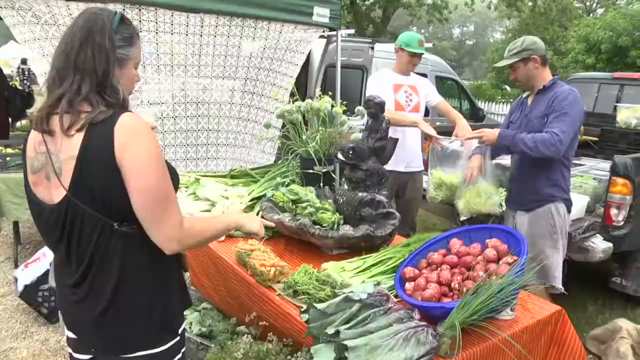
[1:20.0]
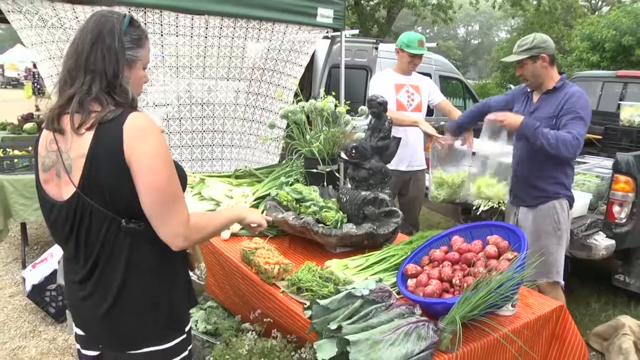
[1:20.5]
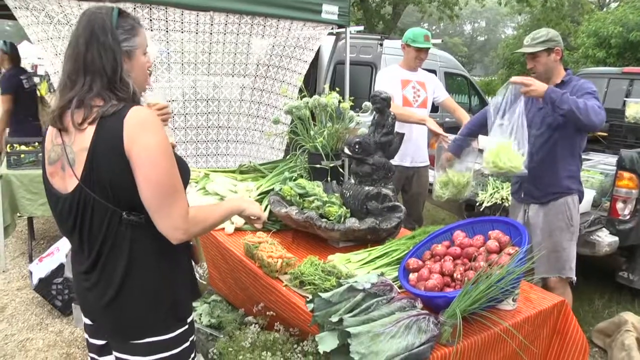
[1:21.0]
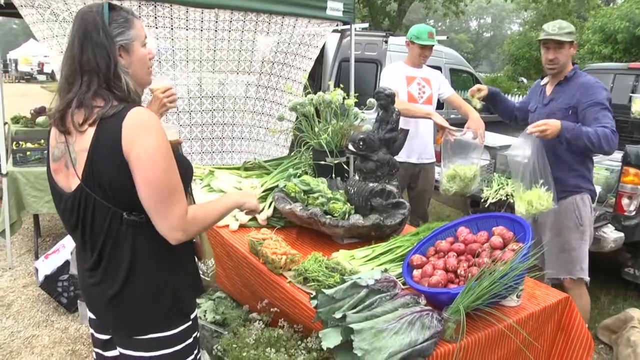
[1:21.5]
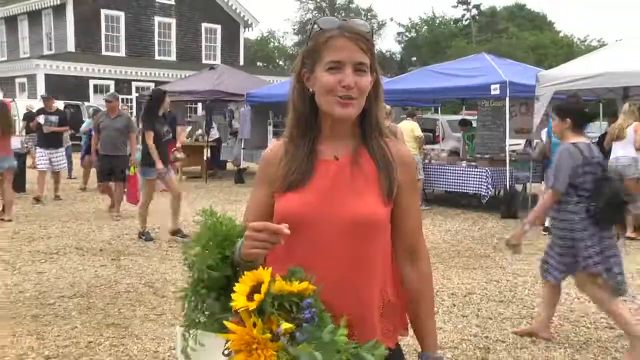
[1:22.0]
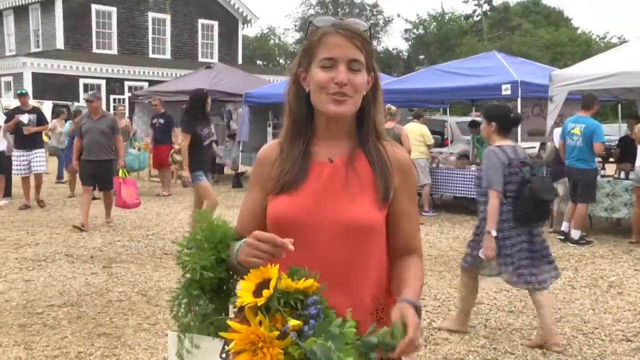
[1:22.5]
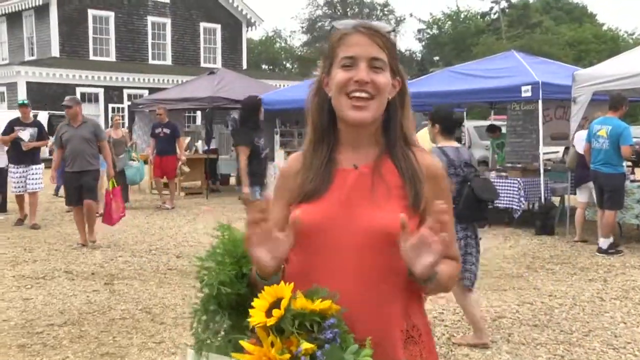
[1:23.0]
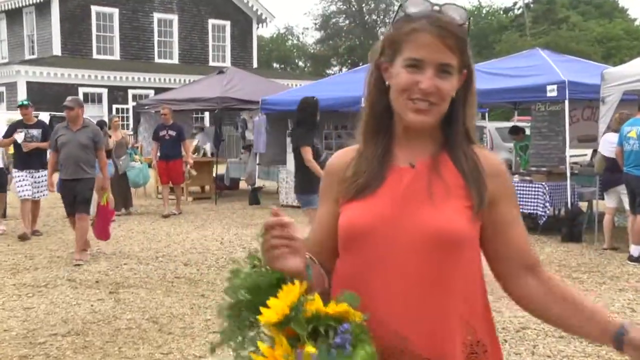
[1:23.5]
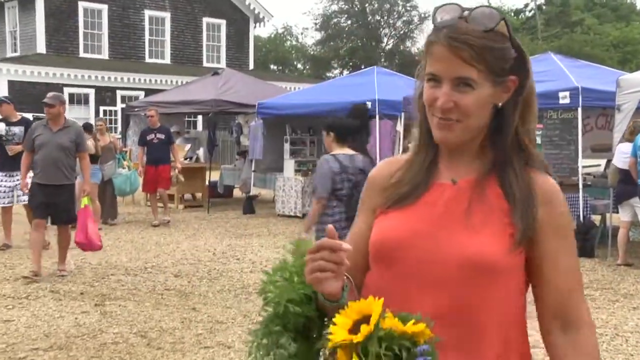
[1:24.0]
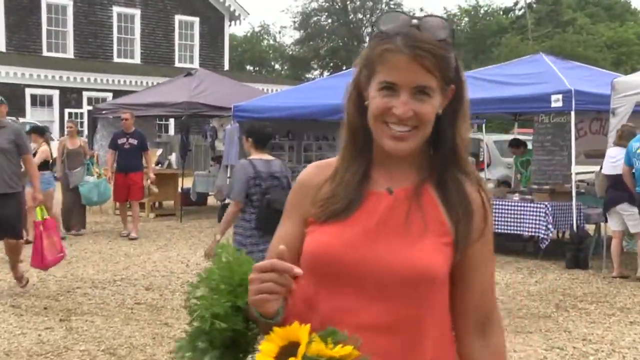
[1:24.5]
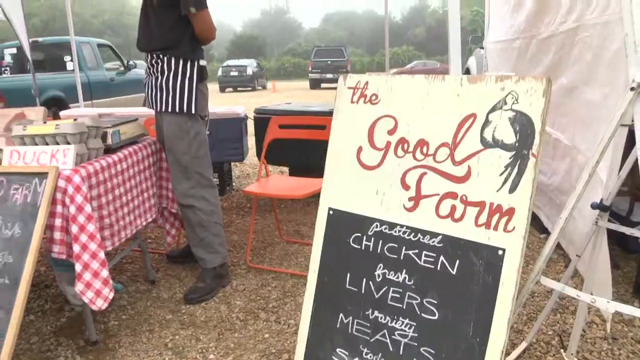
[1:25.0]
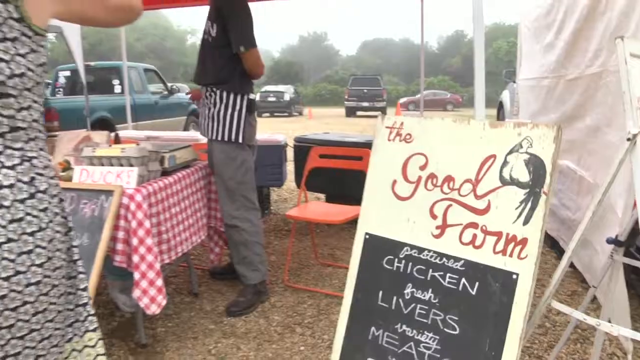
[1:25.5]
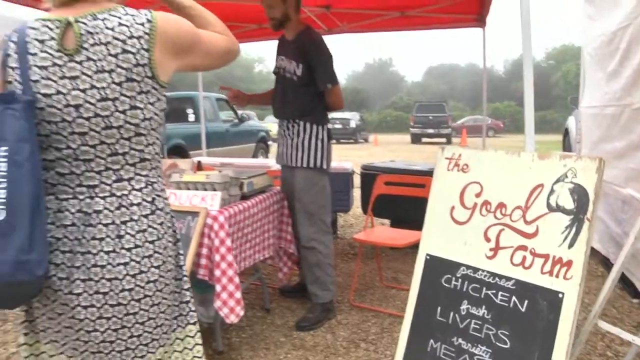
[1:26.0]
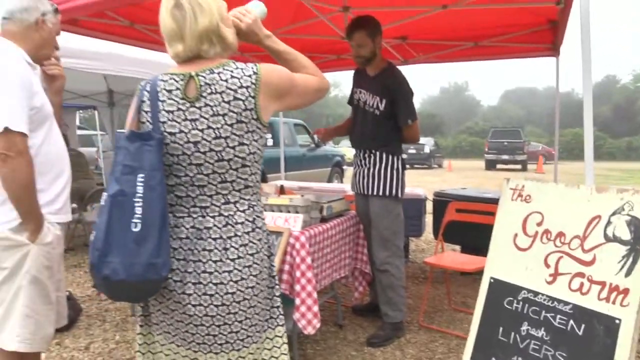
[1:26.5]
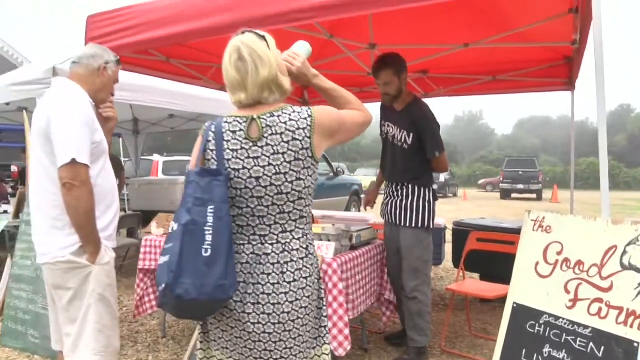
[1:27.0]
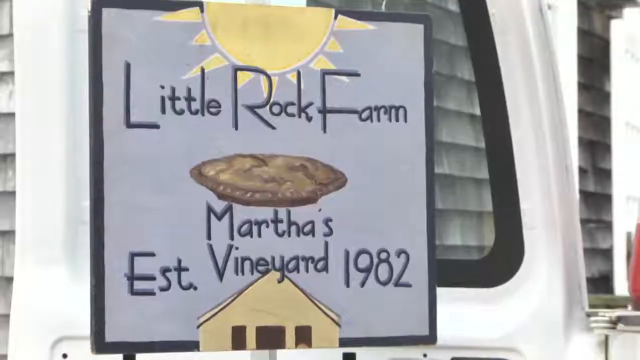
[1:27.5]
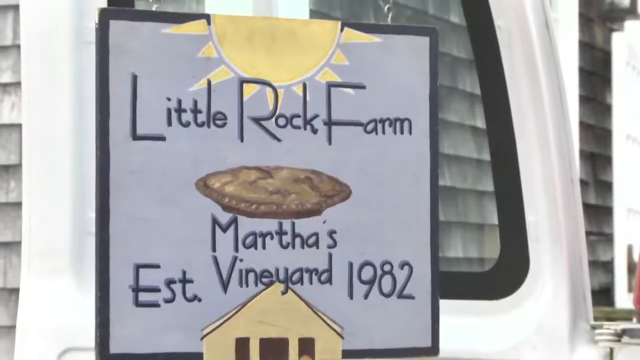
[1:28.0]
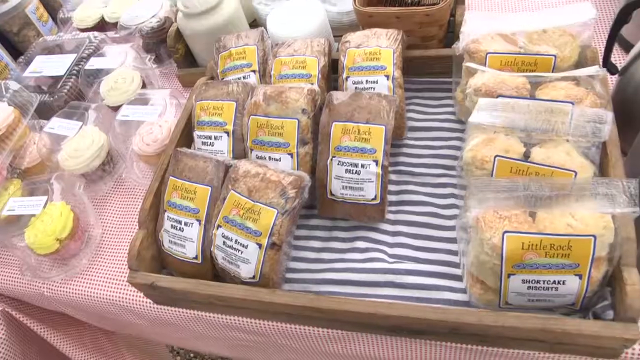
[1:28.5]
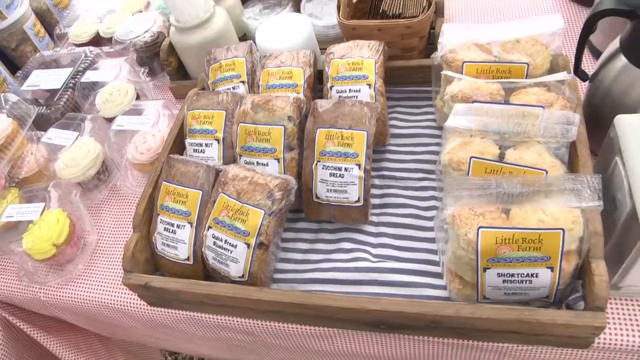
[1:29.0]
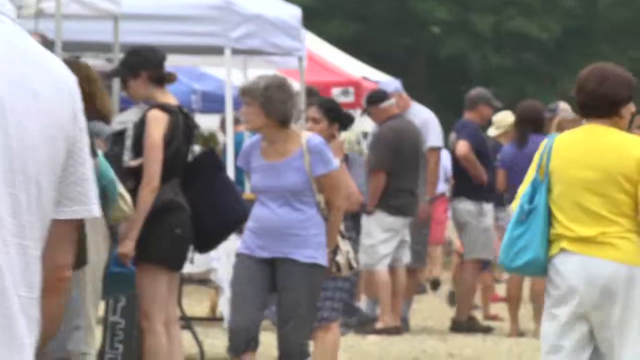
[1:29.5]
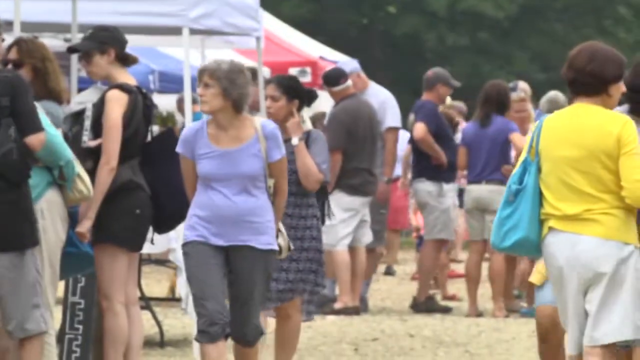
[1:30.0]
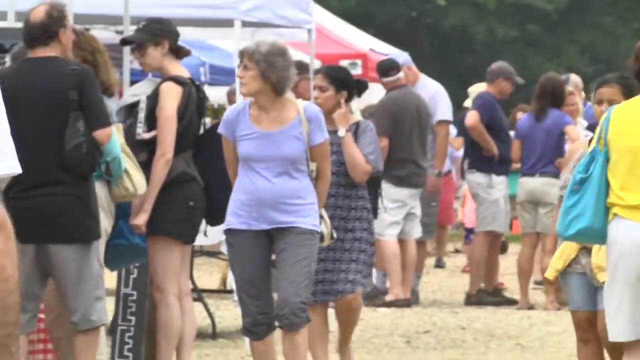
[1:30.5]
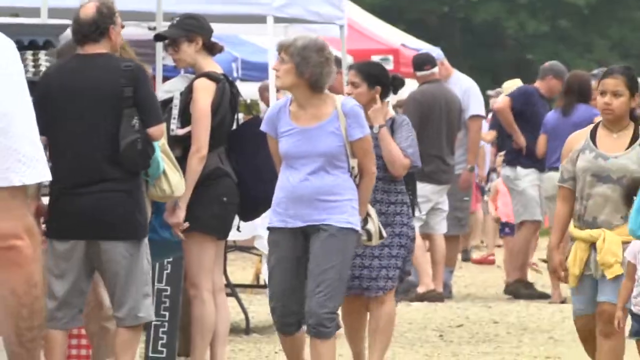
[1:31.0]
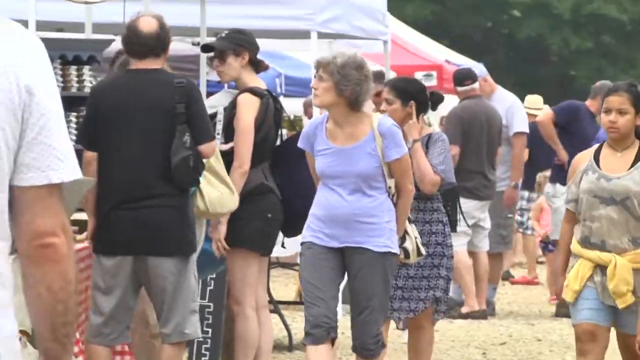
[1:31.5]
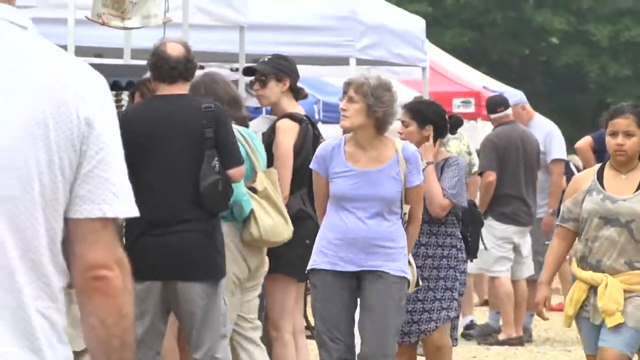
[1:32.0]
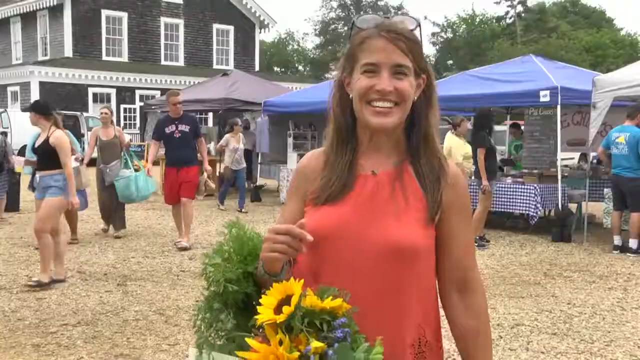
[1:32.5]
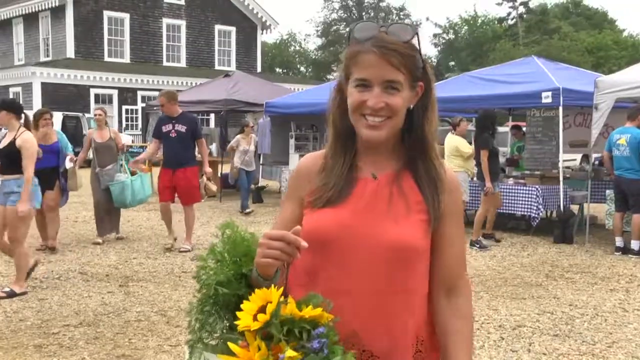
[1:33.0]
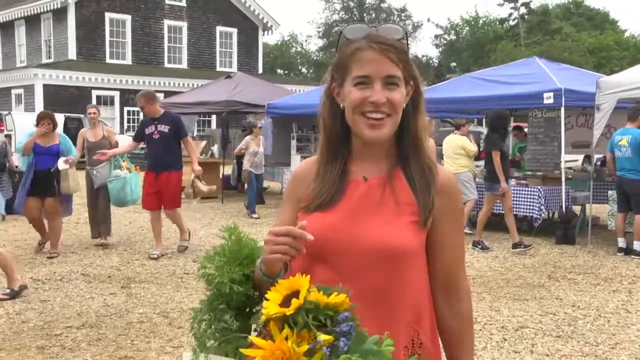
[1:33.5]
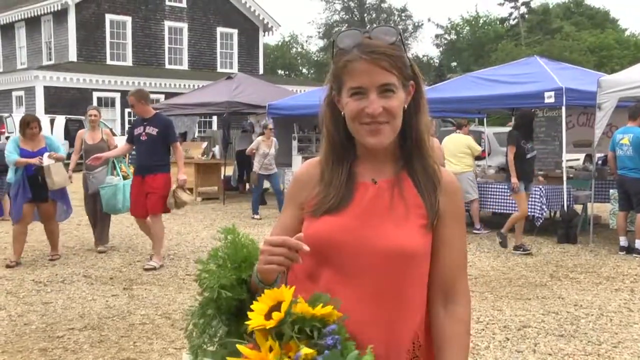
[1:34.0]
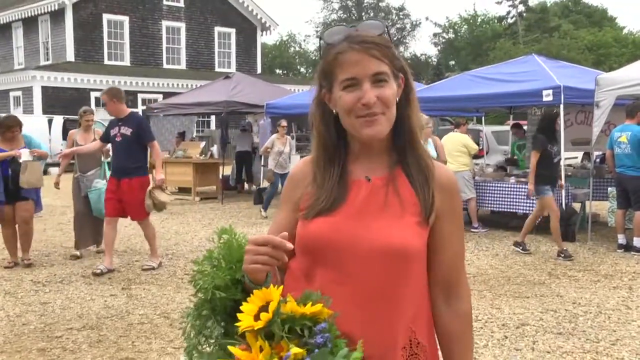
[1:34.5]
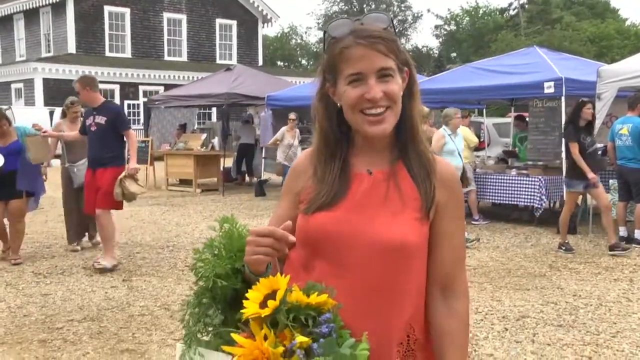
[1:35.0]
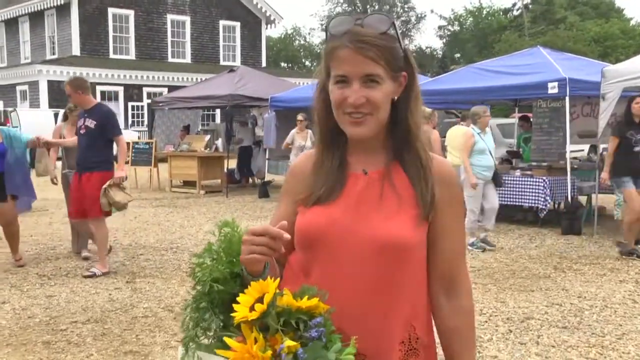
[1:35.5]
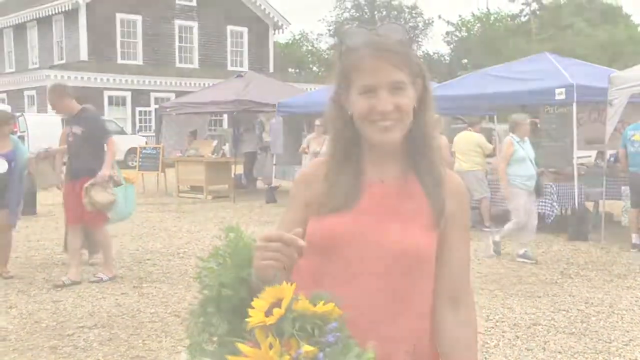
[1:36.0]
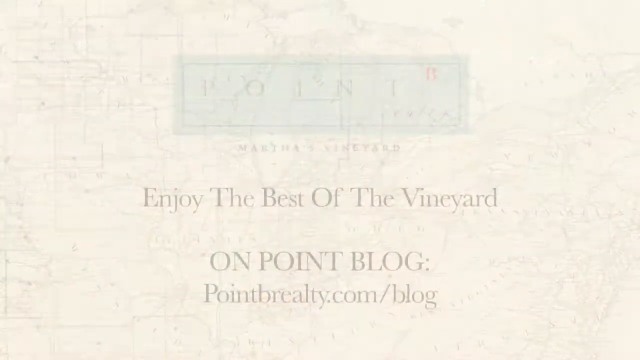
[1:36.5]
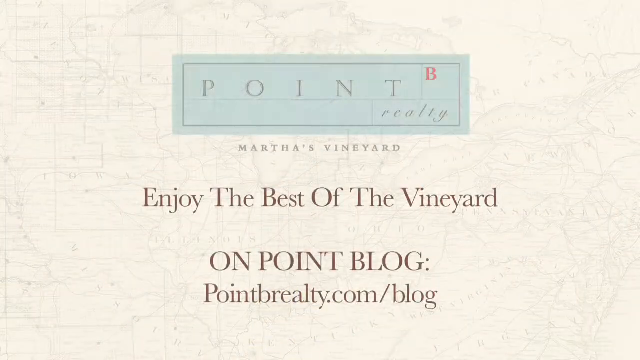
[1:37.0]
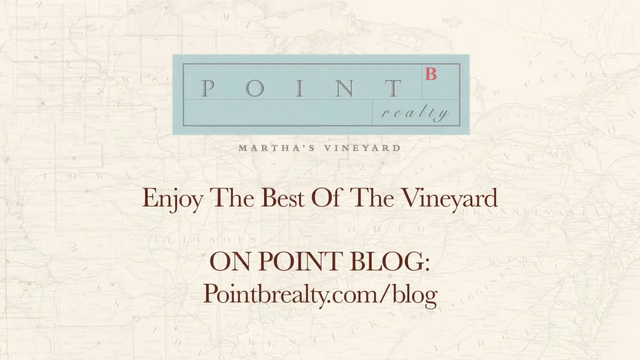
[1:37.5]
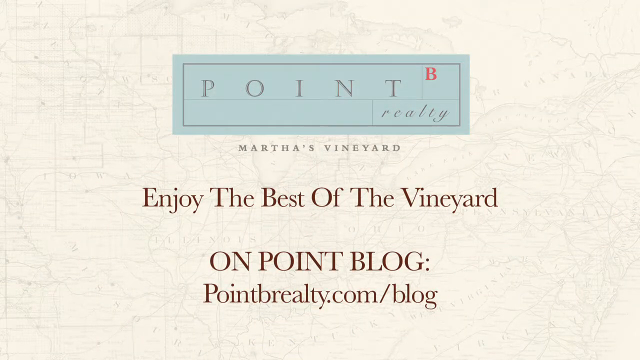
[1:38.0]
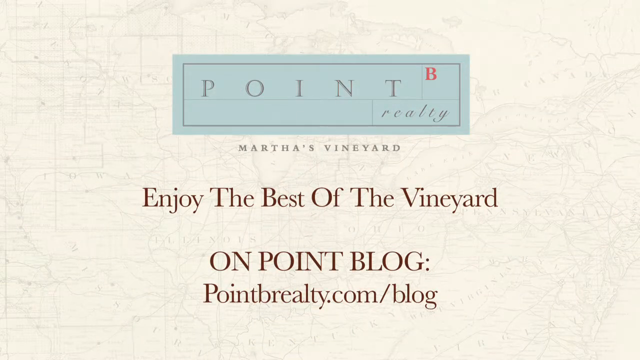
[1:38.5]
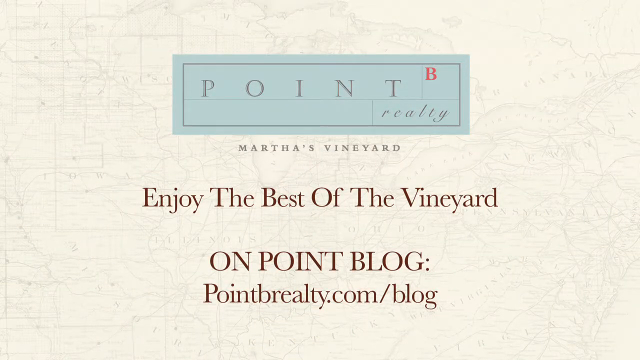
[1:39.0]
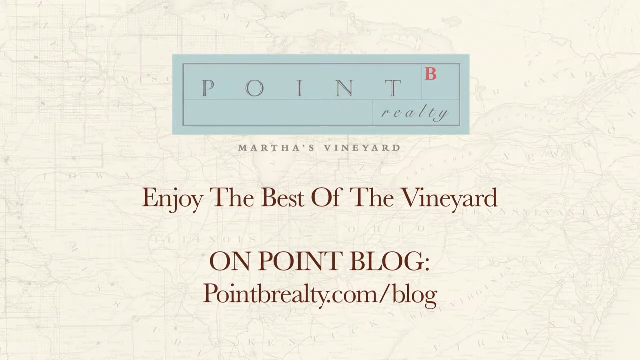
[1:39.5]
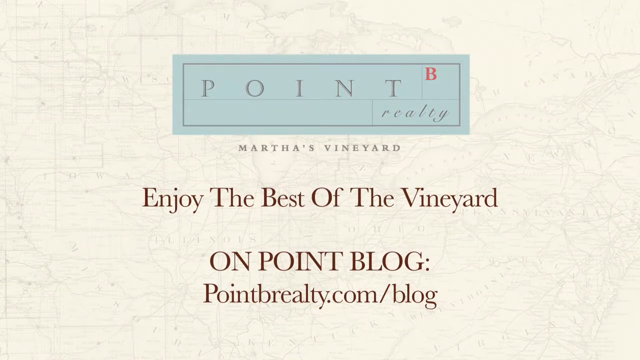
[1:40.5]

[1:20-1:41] A lady in a black dress with shoulder-length brown hair is at a fresh produce stall, where two gentlemen serve her; she has a cabbage in her bag. The video cuts to the lady who seems to be the presenter, wearing a red top, with shoulder-length brown hair and glasses on her head; a bag of flowers she purchased is wrapped around her left hand. A board shows chicken and fresh livers for sale, and "Little Rock Farm" shows on the video. A Little Rock Farm stall has shortcake and other items for sale. Bustling people attend the various stalls, and the video cuts to the lady in the red top talking to the camera before ending on text saying "enjoy the best of the vineyard" with a website address for pointreality.